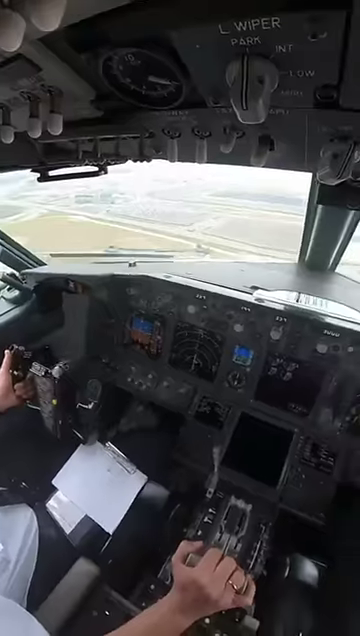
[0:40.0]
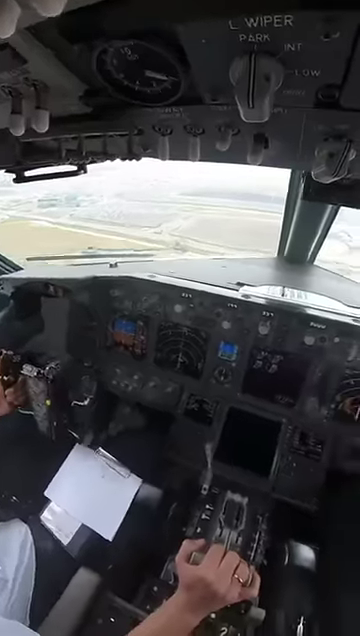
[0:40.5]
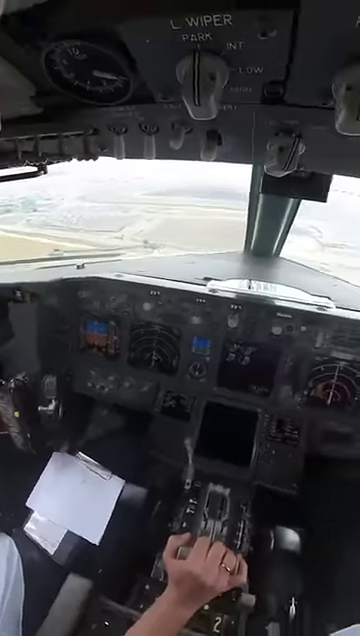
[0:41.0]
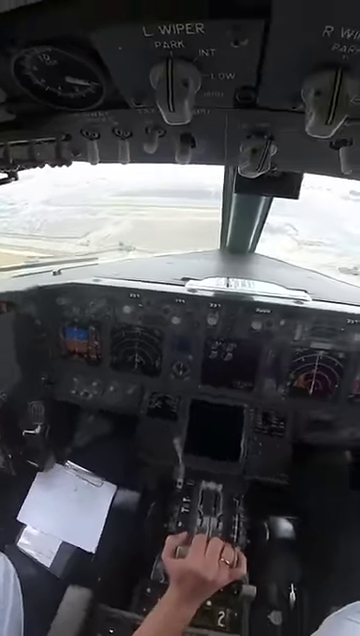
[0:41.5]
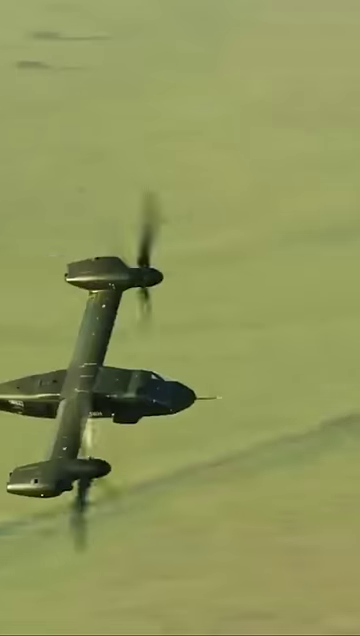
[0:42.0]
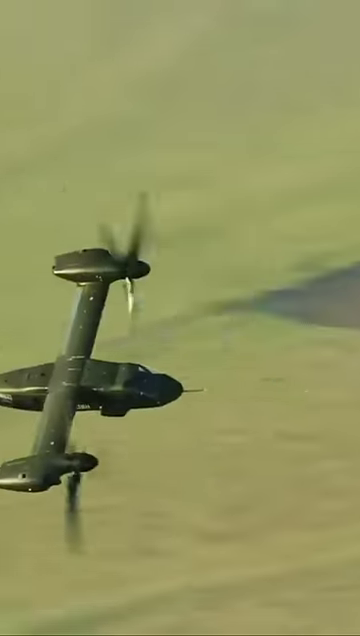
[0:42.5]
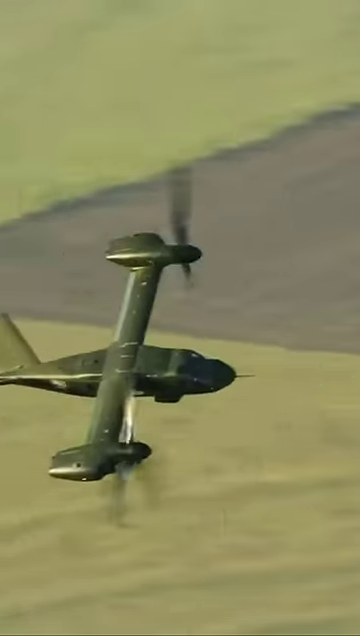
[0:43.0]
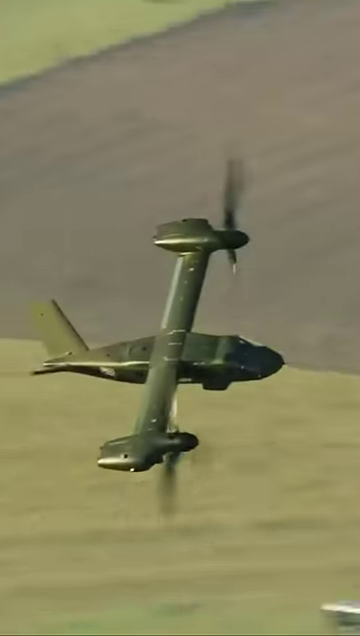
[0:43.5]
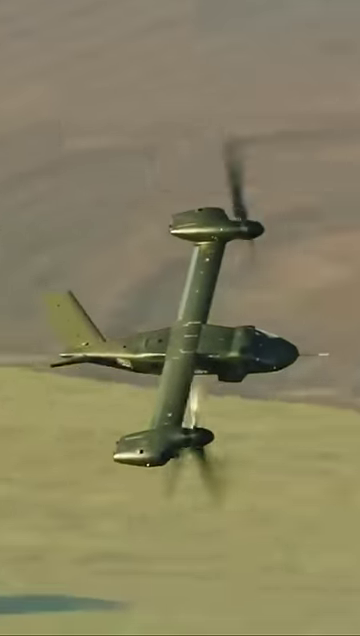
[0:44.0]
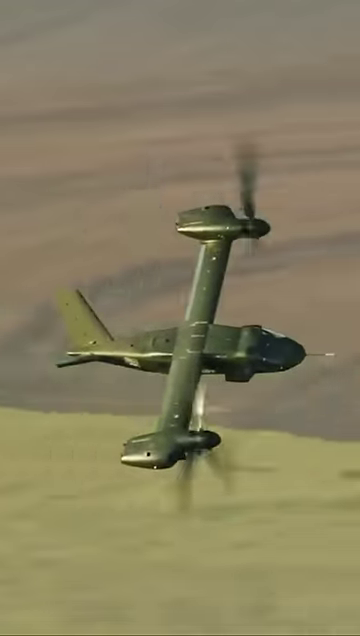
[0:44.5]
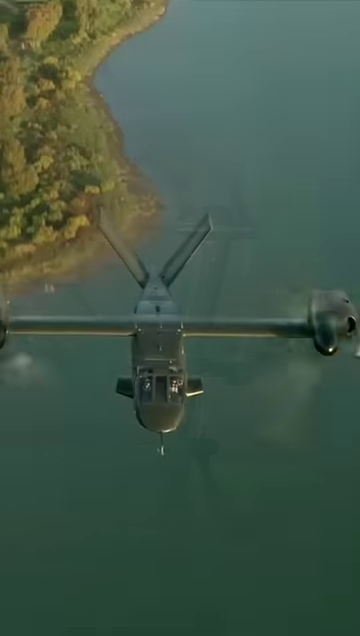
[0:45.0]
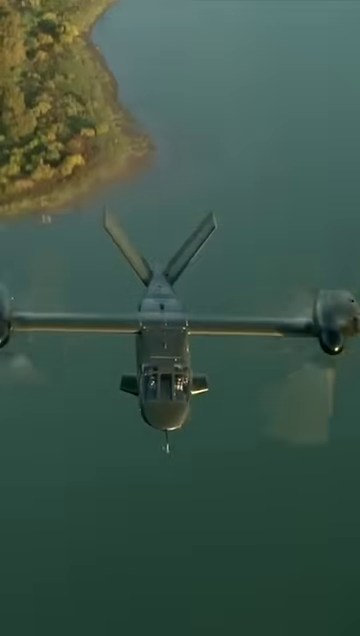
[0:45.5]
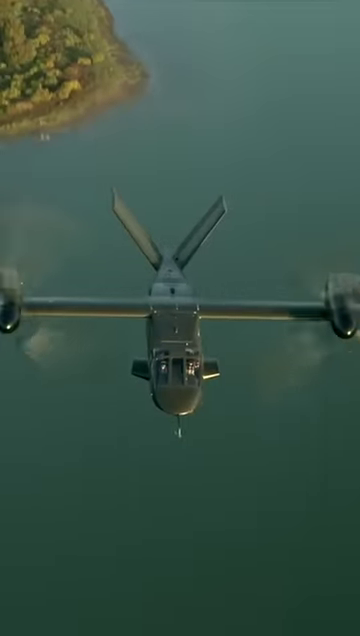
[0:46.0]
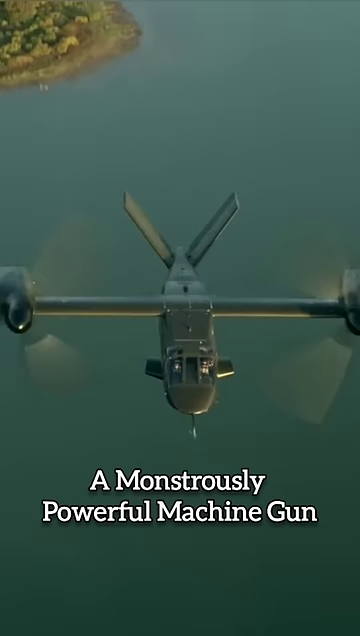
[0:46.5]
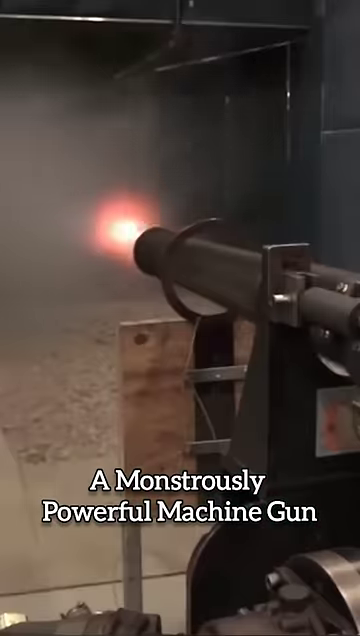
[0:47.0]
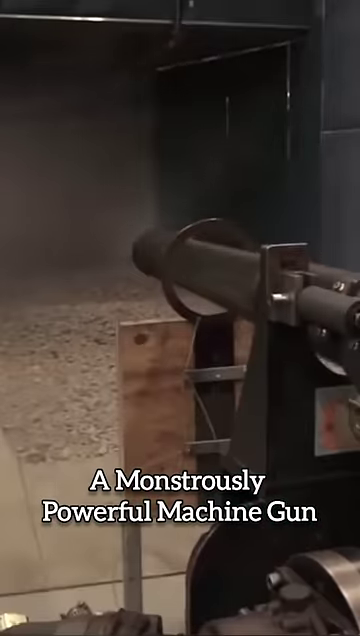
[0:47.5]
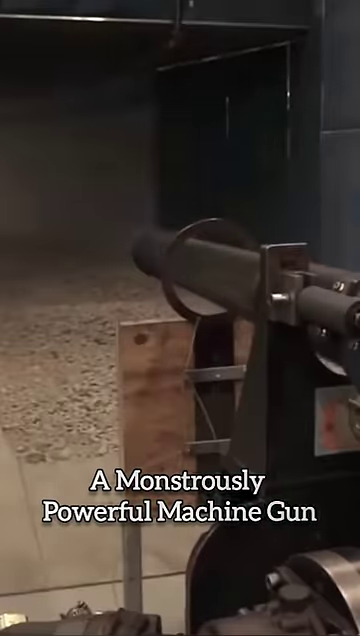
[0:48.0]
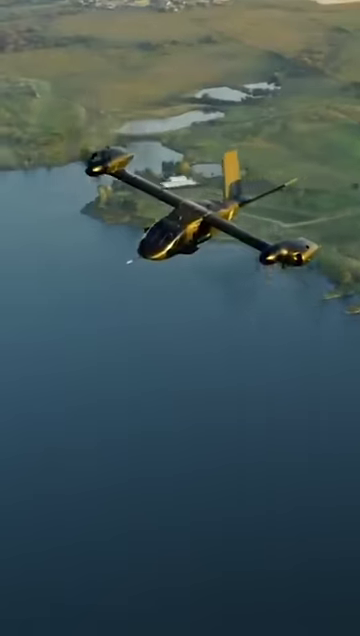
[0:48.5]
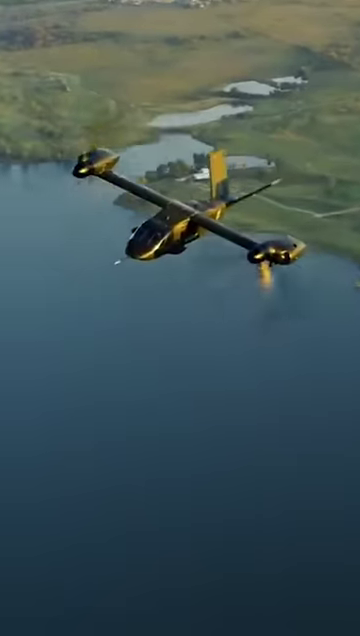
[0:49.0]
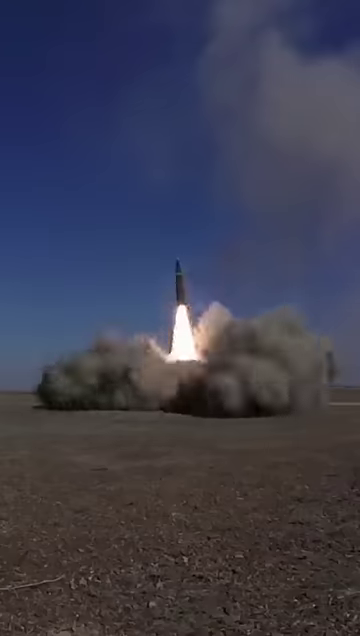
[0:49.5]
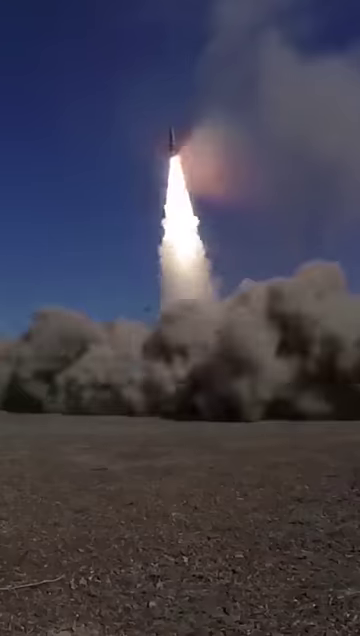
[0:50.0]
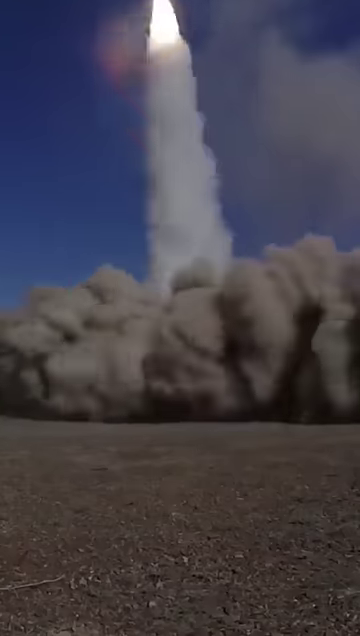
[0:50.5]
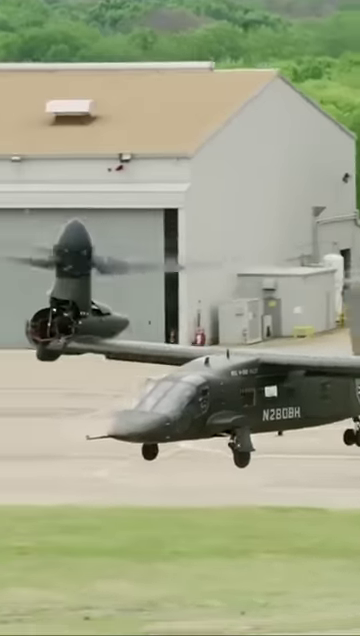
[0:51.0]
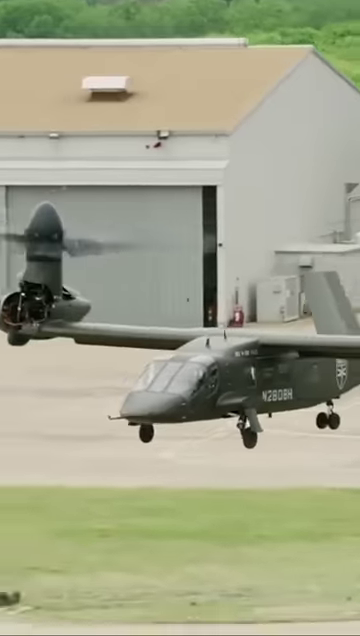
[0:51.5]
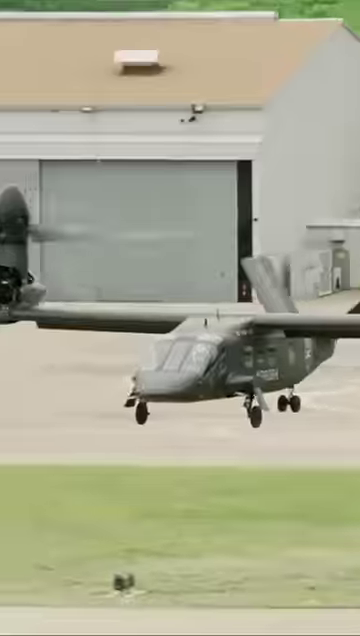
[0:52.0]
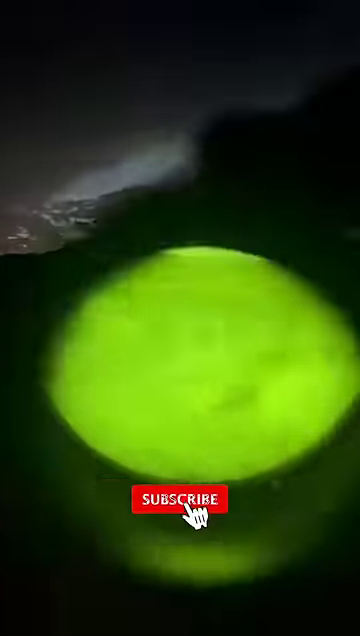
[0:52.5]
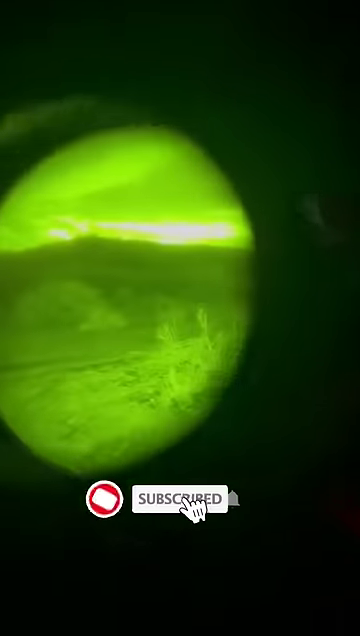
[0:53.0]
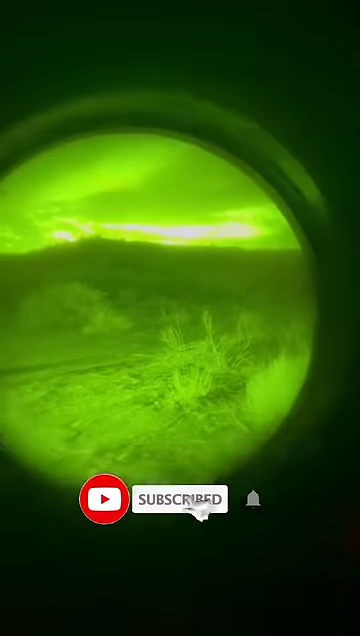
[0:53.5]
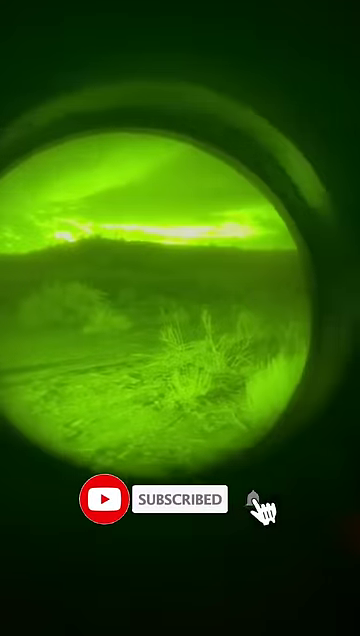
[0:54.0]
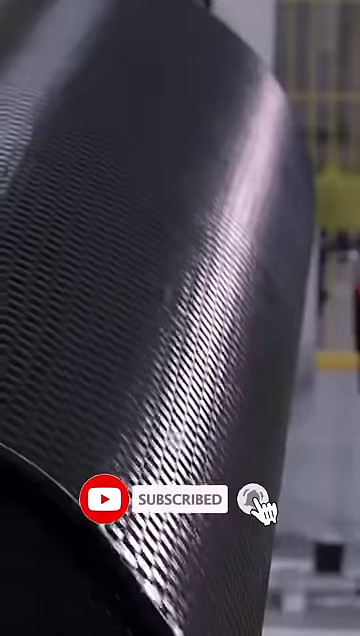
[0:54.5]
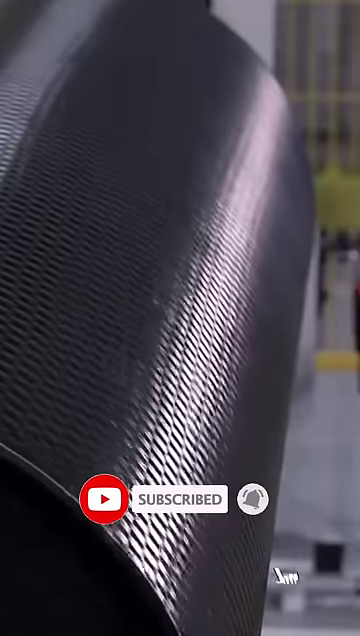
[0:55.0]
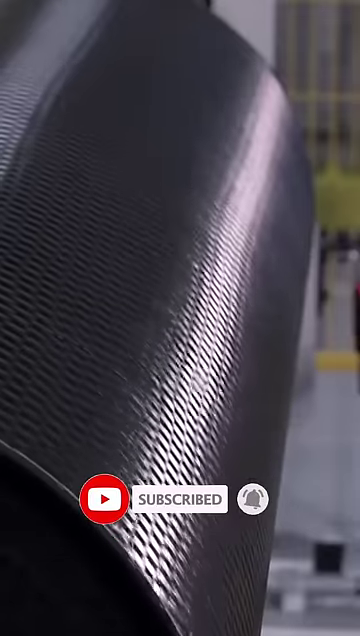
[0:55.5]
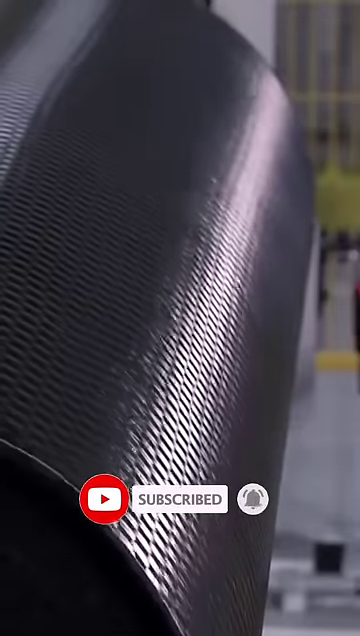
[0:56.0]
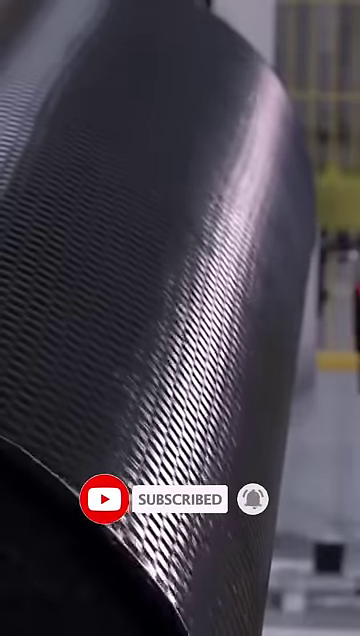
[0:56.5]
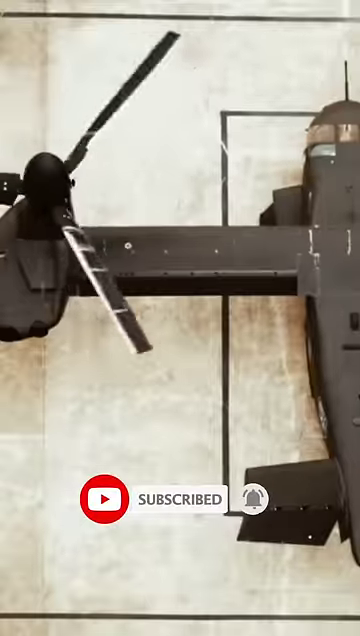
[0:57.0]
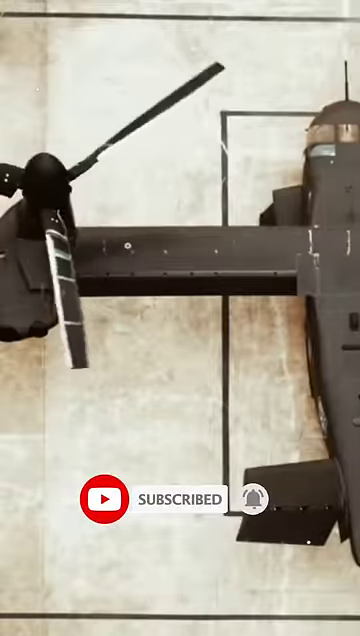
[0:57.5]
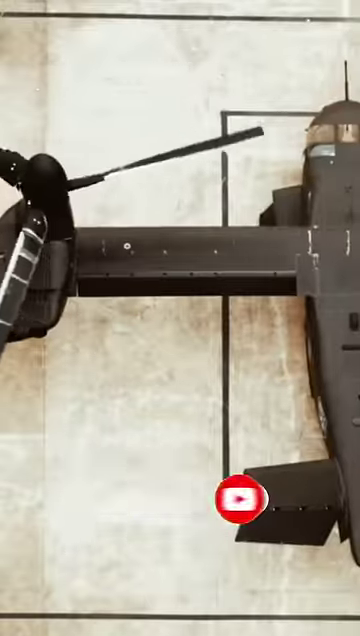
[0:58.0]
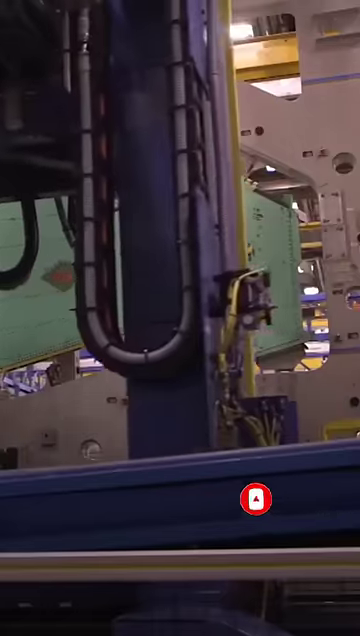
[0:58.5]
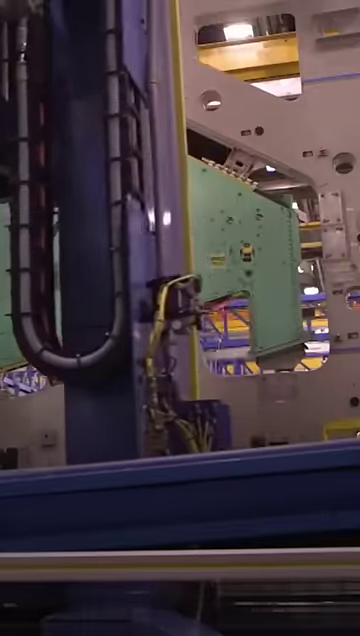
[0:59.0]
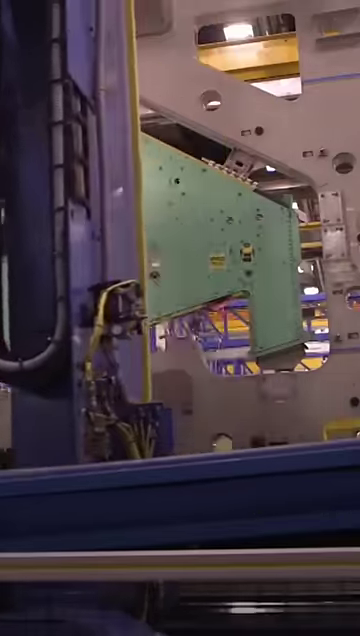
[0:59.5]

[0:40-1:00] Images of the military vehicle, which looks to be a hybrid of a helicopter and an airplane, continue from different angles as it flies in different areas. Some shots show what are apparently its weapons: a machine gun, and a shot of a rocket, although the aircraft does not look to be jet powered. There are also some images of what looks to be night vision.